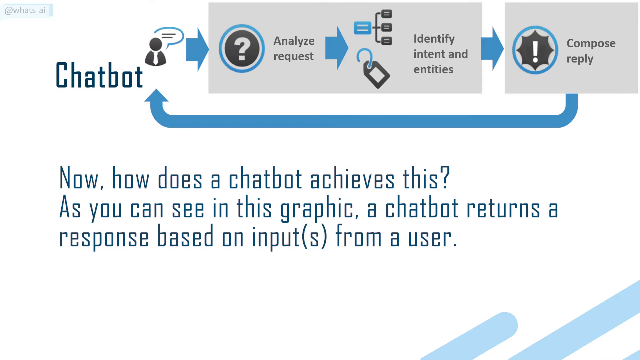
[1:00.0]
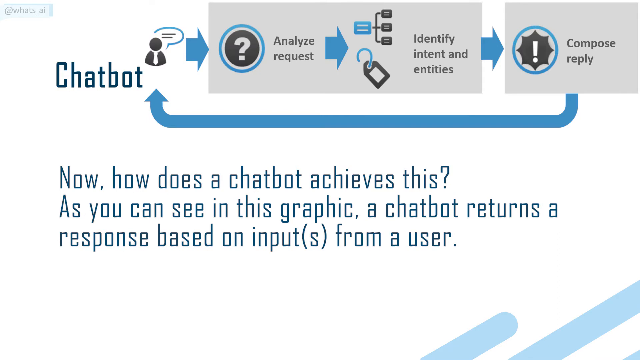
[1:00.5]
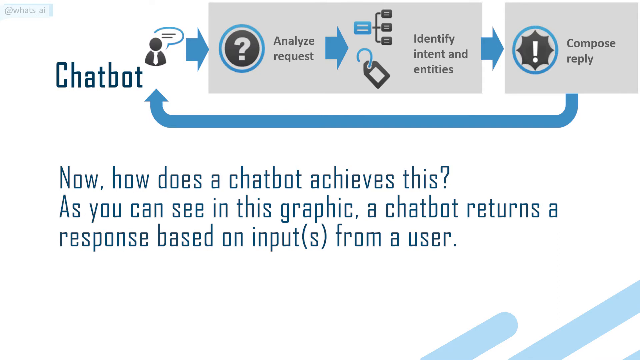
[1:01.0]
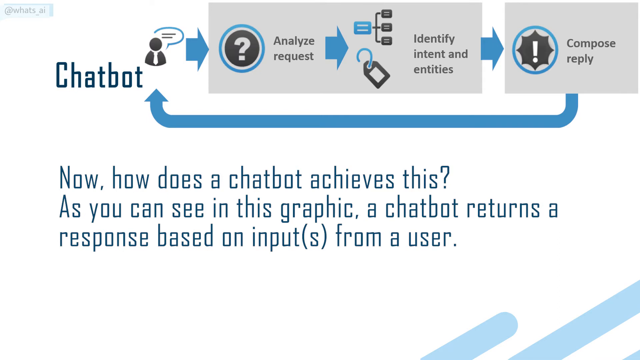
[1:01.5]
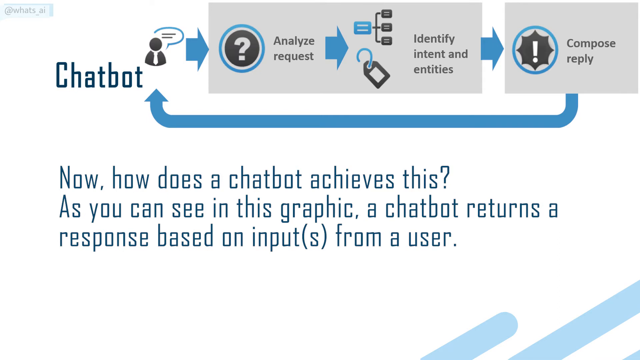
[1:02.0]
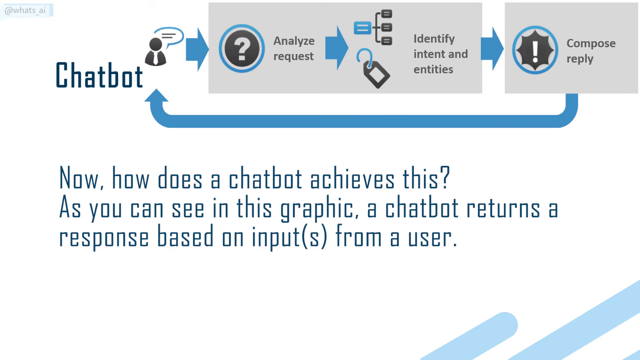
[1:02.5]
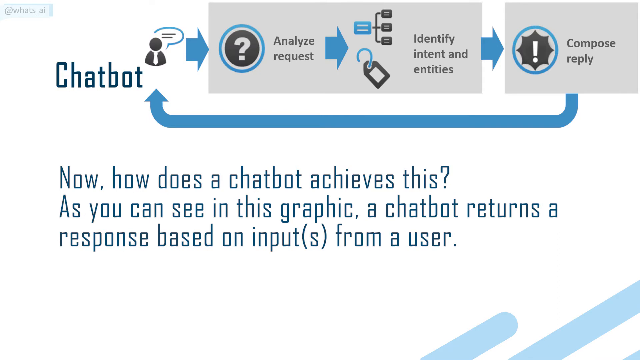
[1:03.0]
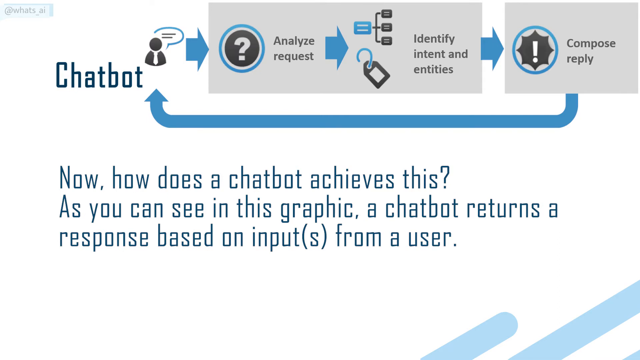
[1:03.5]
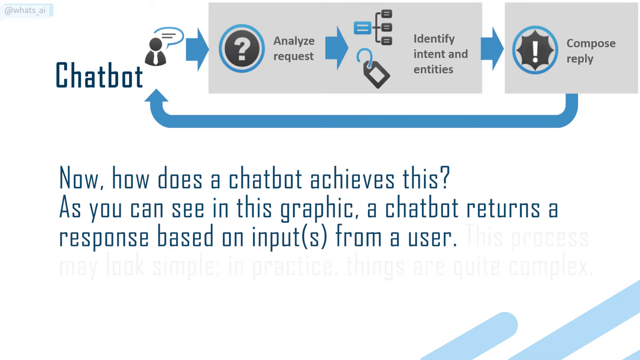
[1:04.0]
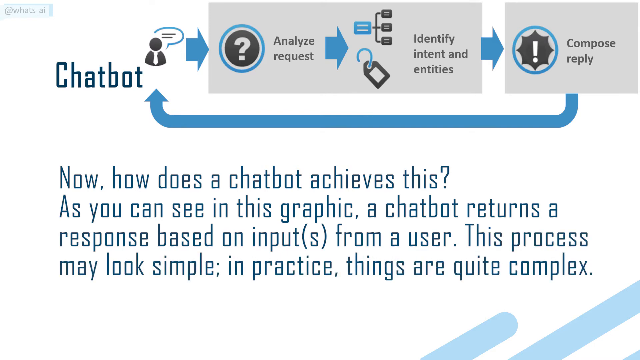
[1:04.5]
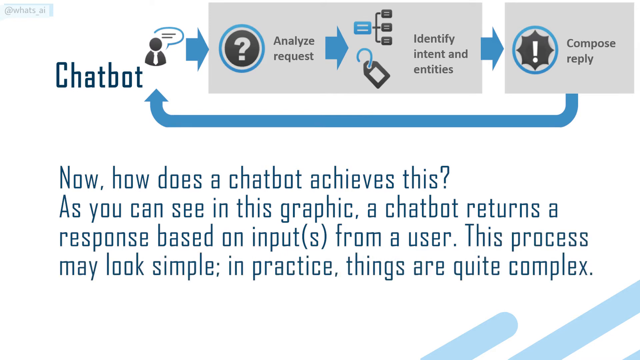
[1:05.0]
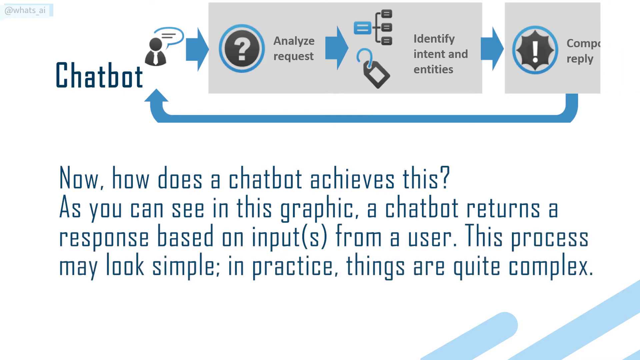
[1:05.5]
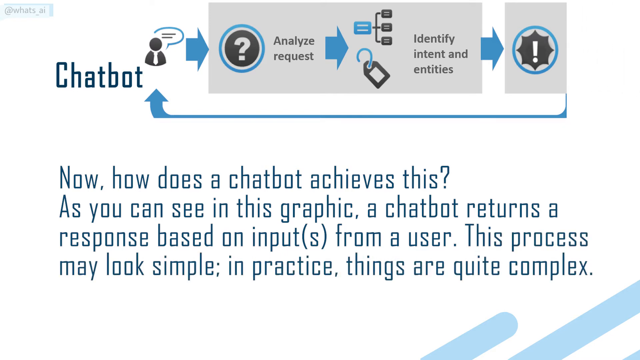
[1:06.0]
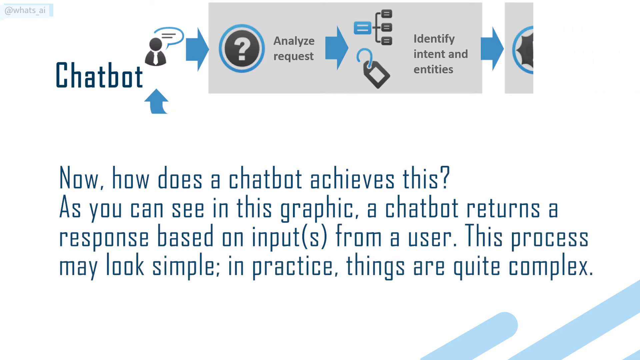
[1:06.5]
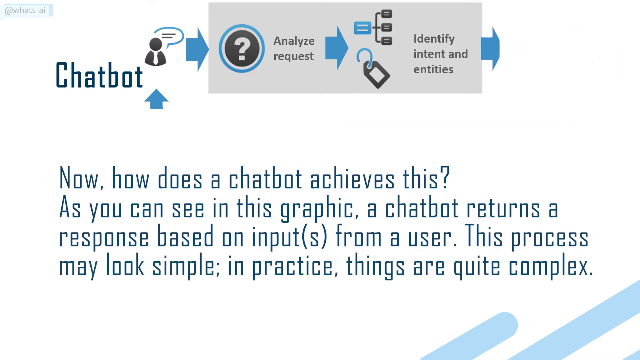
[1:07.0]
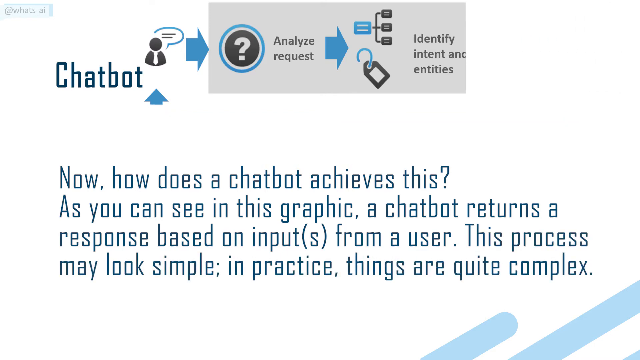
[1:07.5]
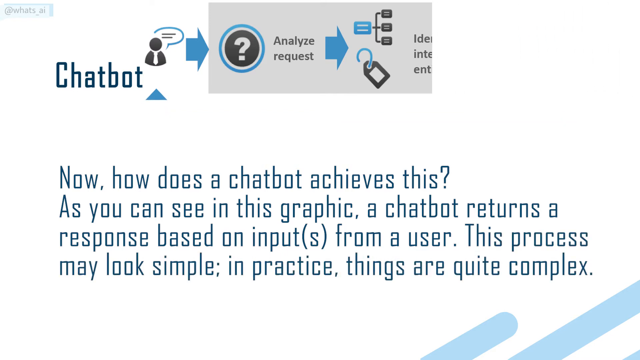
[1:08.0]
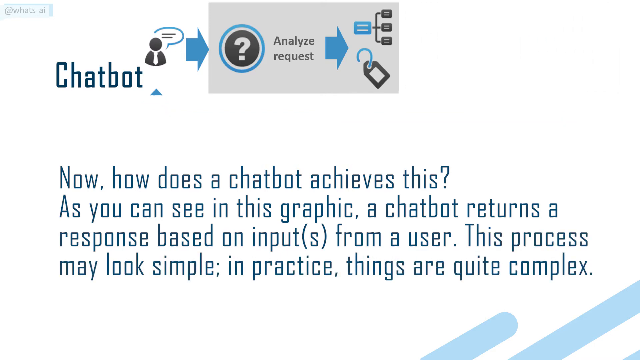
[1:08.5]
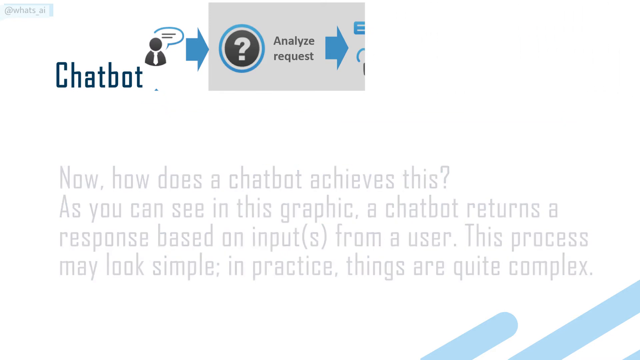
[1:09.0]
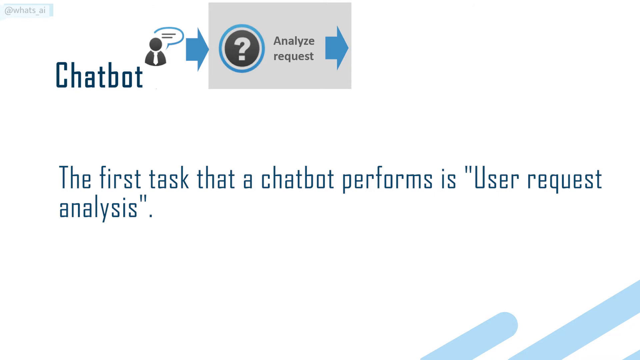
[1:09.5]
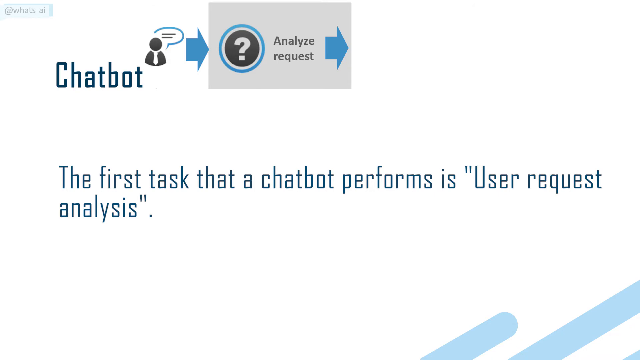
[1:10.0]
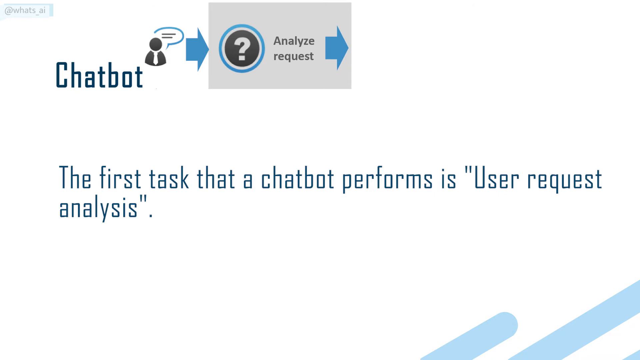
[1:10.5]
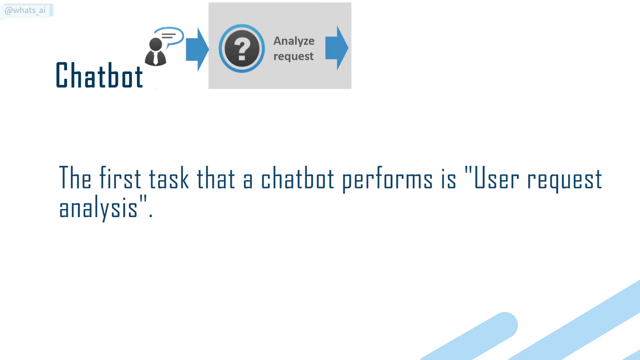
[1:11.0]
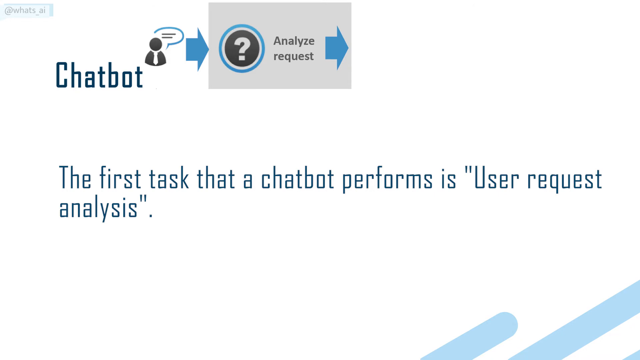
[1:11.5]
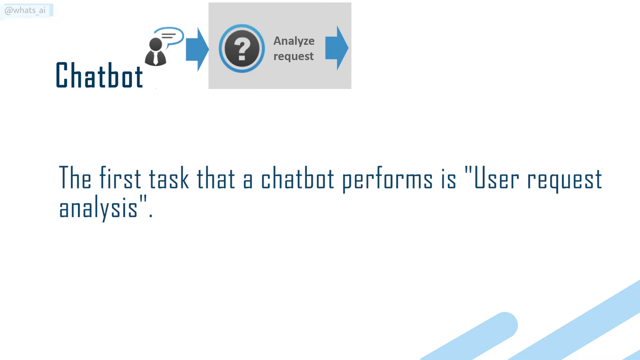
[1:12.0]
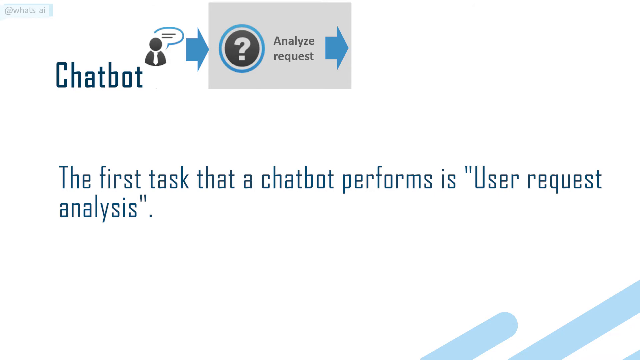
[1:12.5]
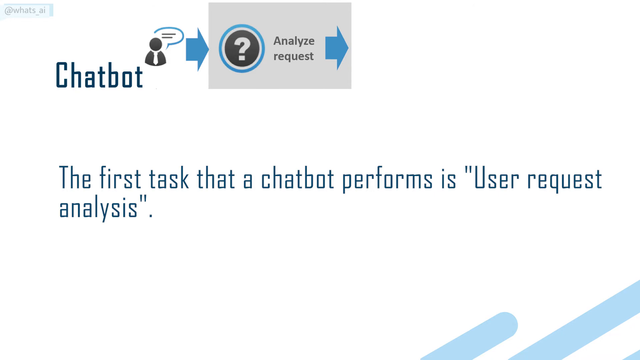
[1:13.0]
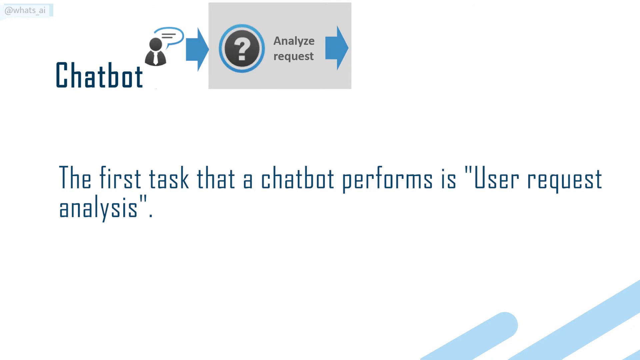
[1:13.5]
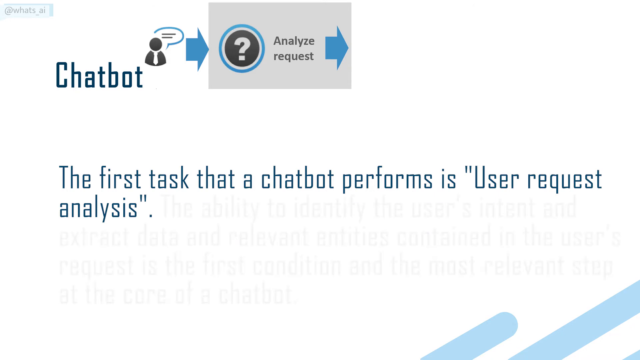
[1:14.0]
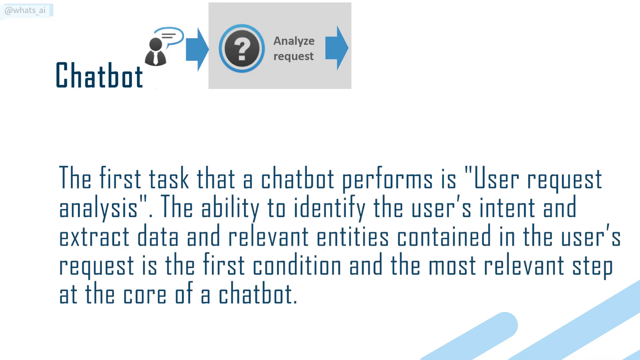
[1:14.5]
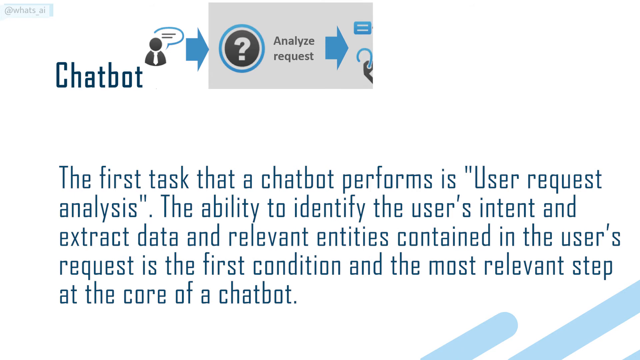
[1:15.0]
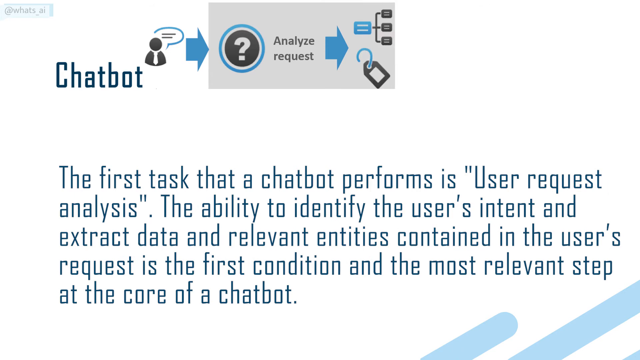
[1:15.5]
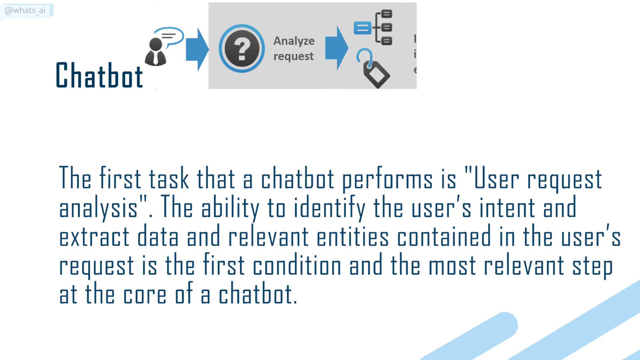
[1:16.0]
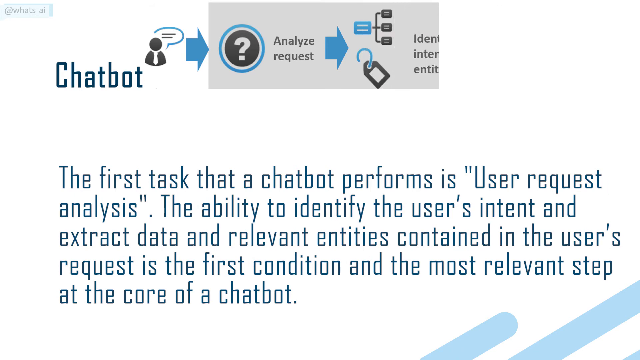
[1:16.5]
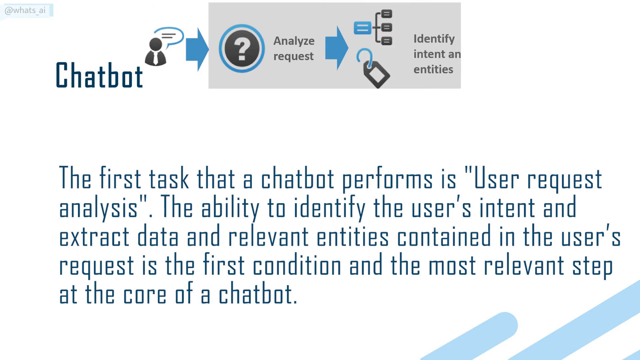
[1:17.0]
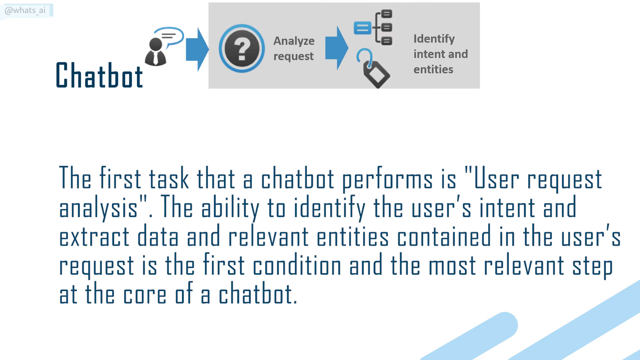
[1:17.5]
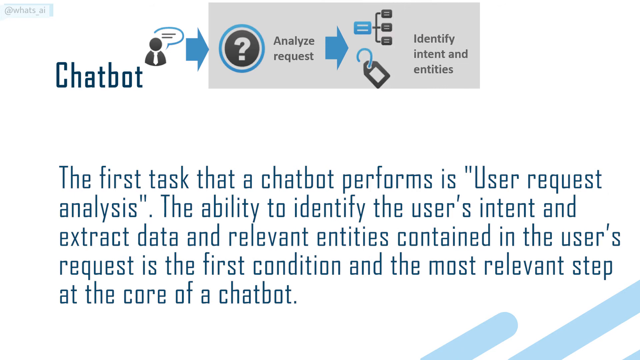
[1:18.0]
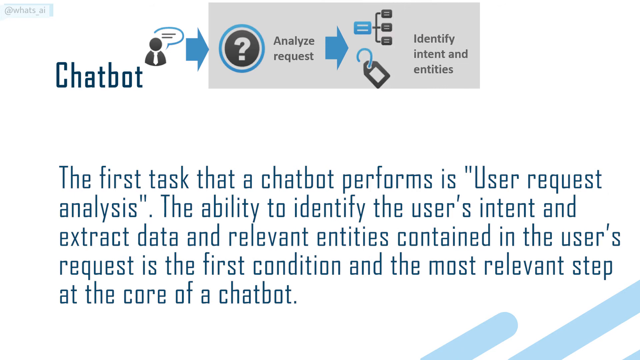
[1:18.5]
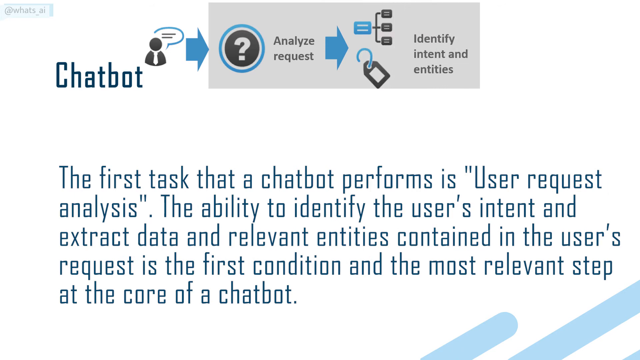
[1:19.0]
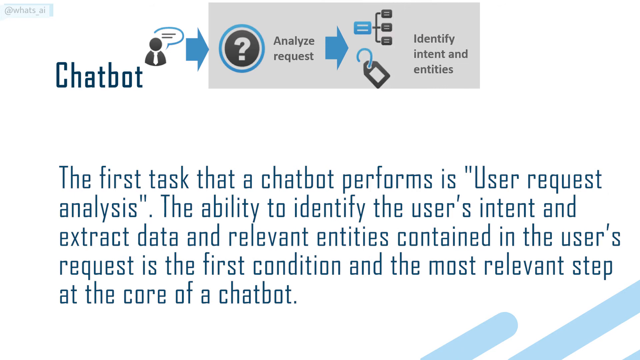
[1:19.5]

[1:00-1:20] A diagram shows how a chatbot works: it analyzes a request and, at the end, composes the reply. The text reads "now how does a chatbot achieve this? As you can see in this graphic, a chatbot returns a response based on inputs from a user." Then it says "this process may look simple. In practice, things are quite complex," and the response and other parts of the diagram disappear. The text reads "the first task that a chatbot performs is user request analysis." The beginning and end of the diagram are erased and then put back. The text says "the ability to identify the user's intent and extract data and relevant entities contained in the user's request is the first condition and the most relevant step at the core of a chatbot." The diagram is then shown again, picturing how all of this works together.